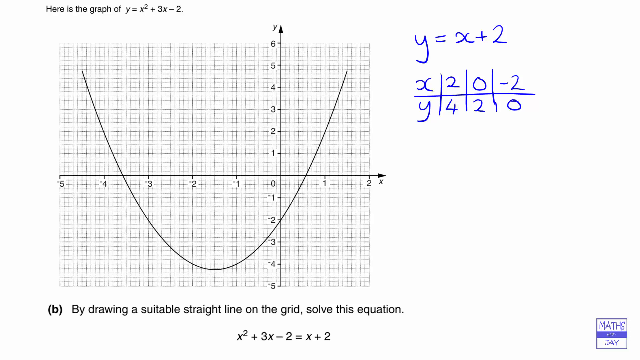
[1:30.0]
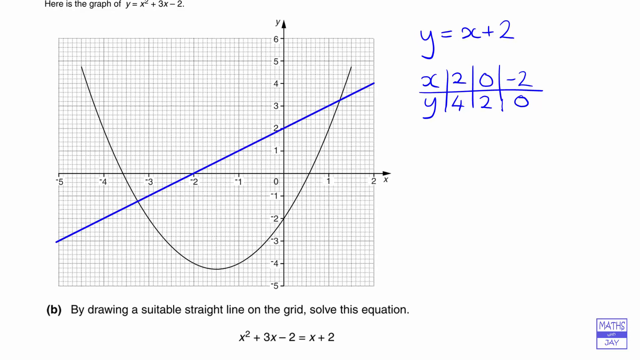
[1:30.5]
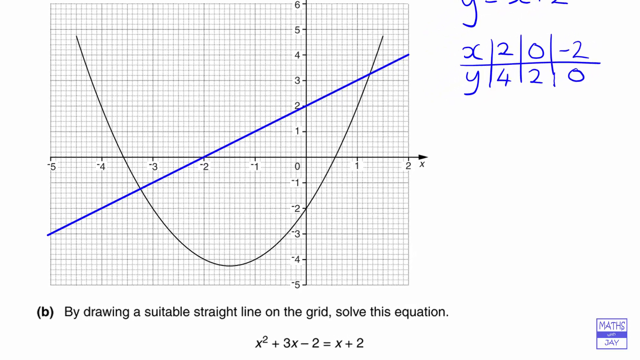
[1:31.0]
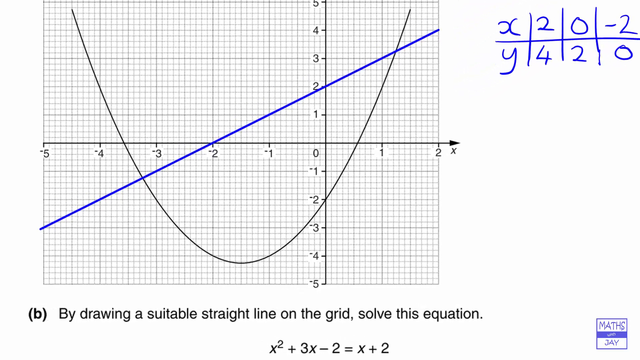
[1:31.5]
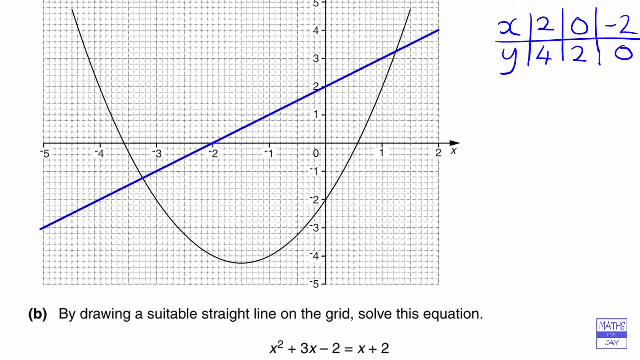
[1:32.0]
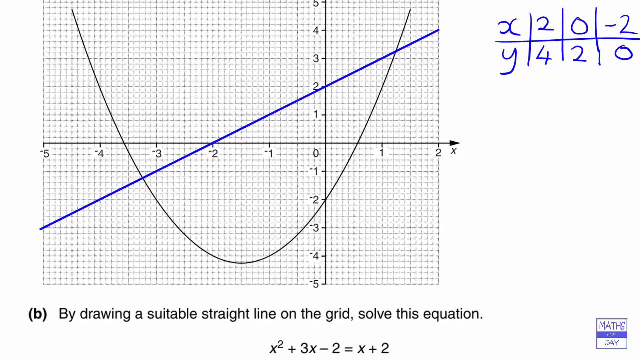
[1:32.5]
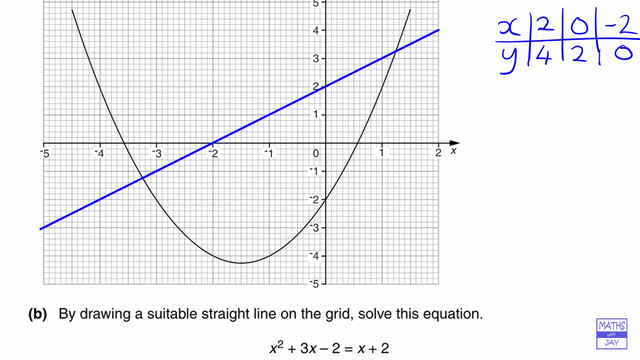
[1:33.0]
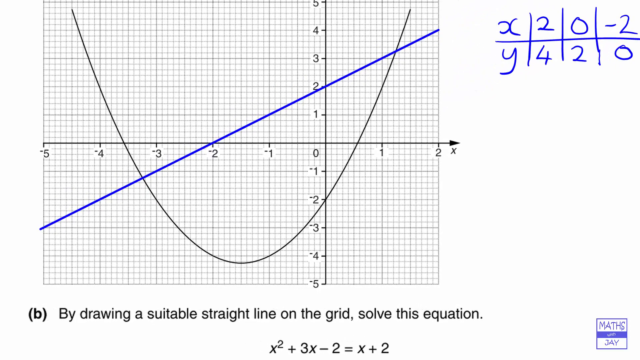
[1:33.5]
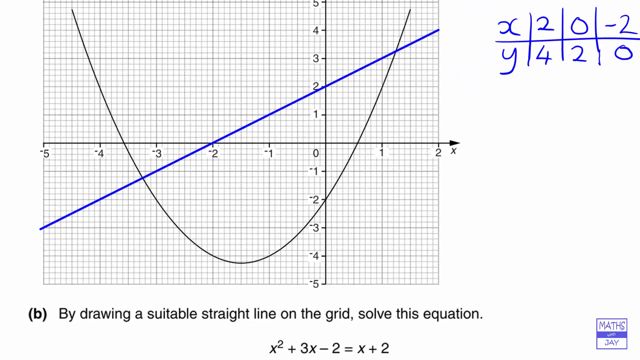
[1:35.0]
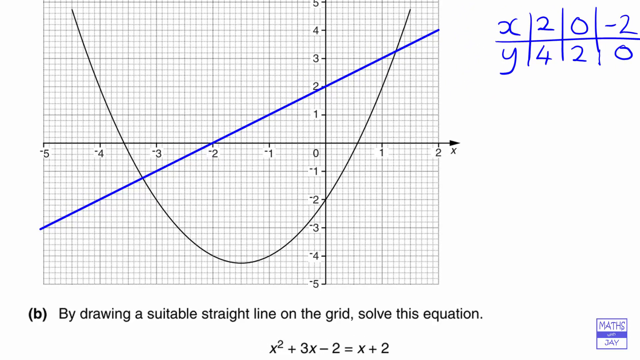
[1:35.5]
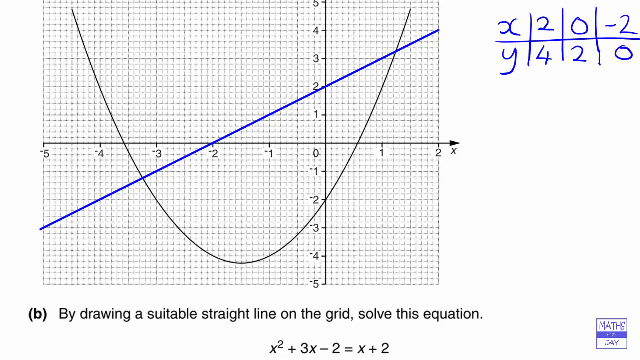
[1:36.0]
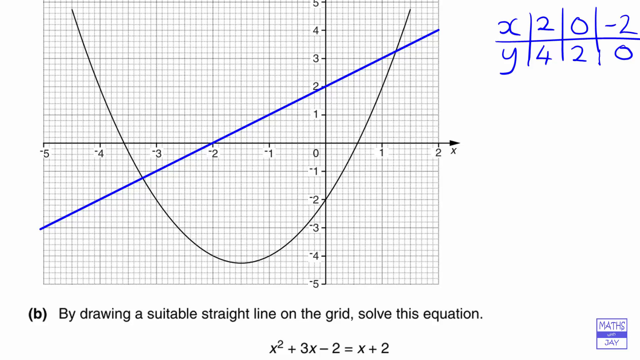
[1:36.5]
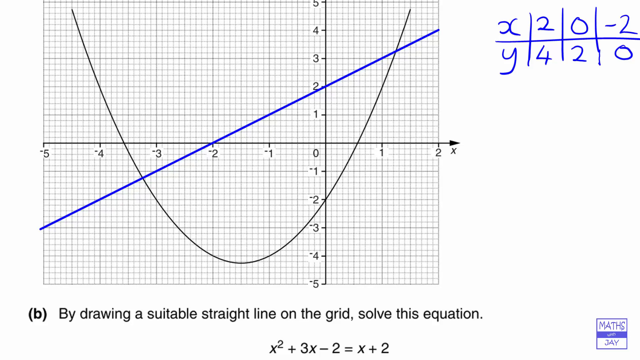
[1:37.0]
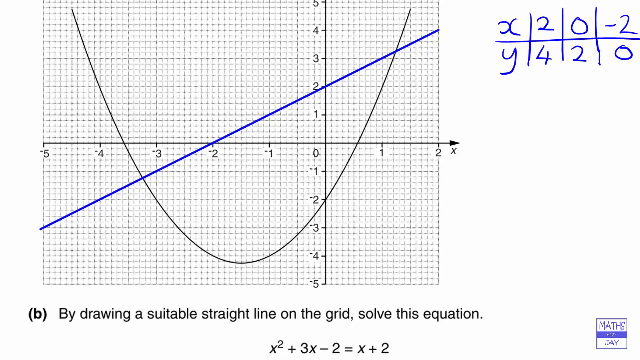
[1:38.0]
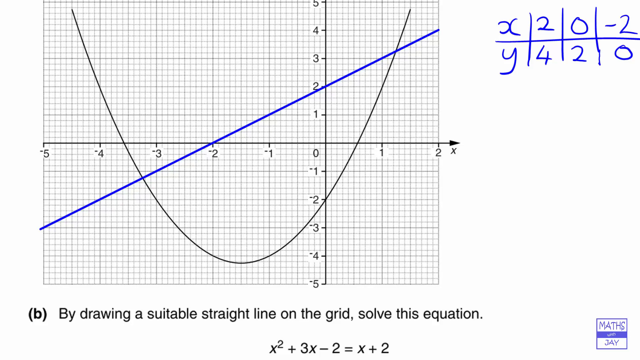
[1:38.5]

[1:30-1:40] The table with x values 2, 0 and −2 and y values 4, 2 and 0 remains. A straight blue line is now on the graph.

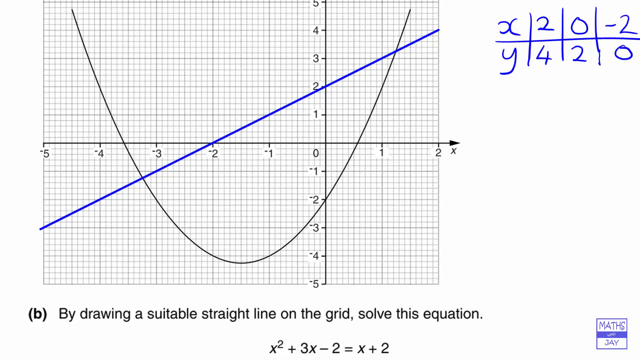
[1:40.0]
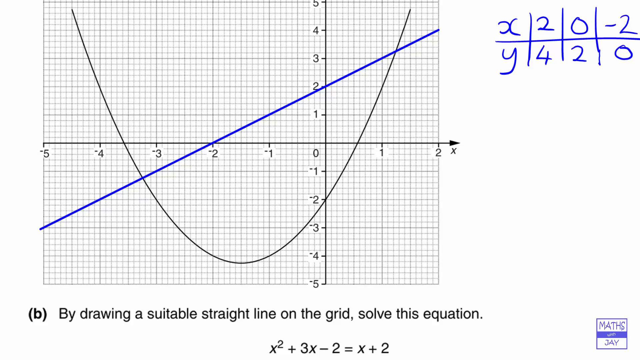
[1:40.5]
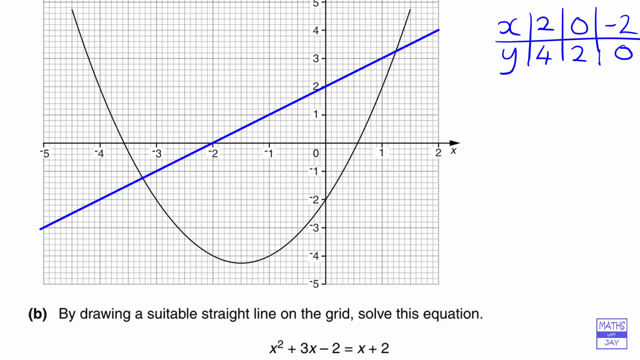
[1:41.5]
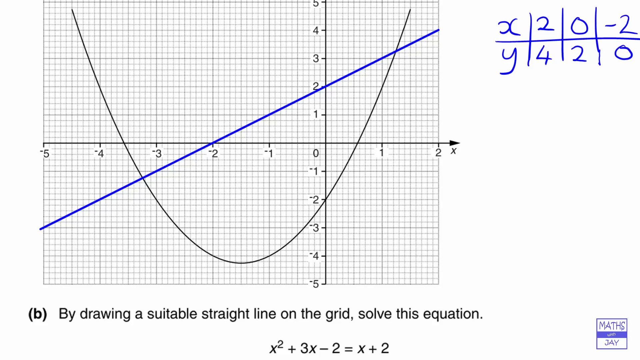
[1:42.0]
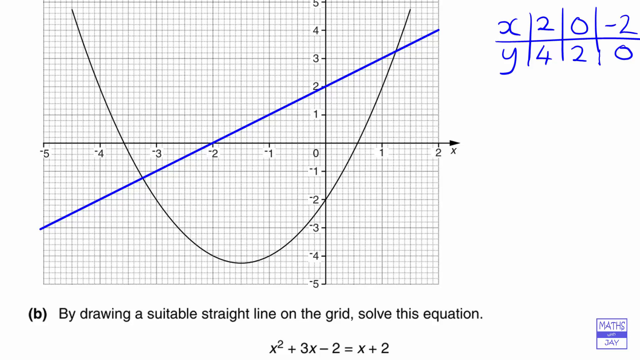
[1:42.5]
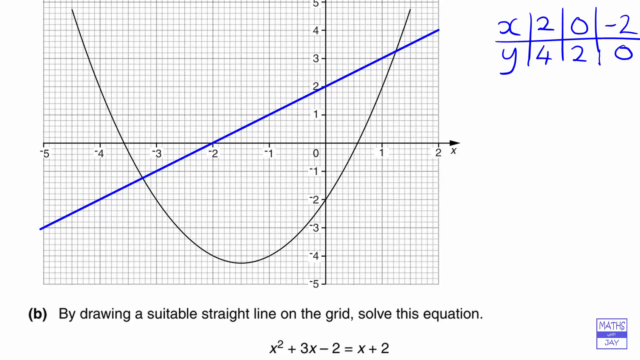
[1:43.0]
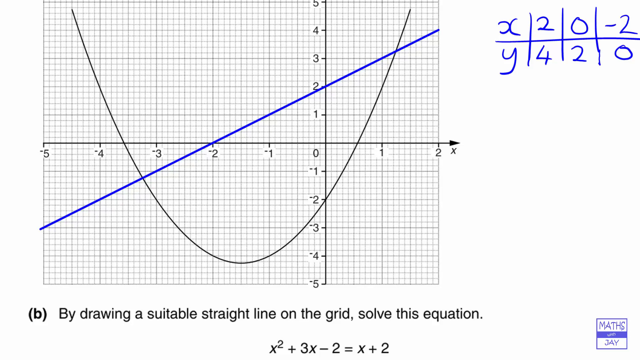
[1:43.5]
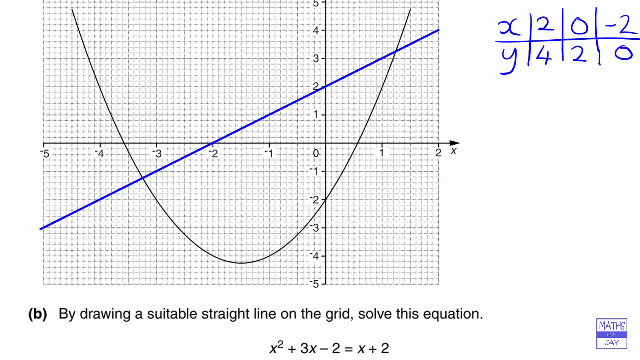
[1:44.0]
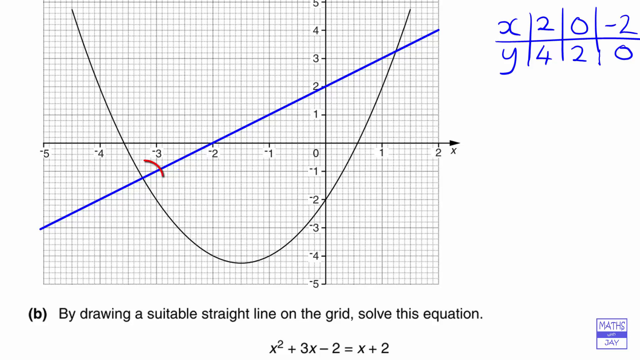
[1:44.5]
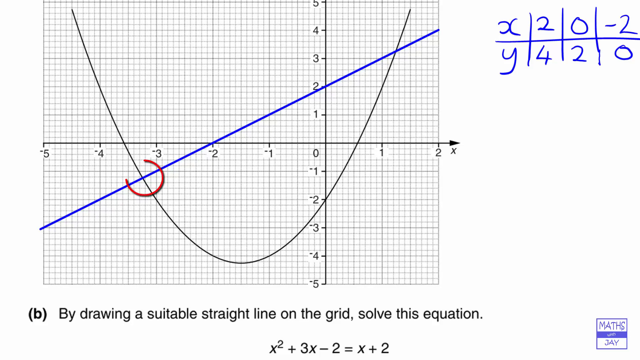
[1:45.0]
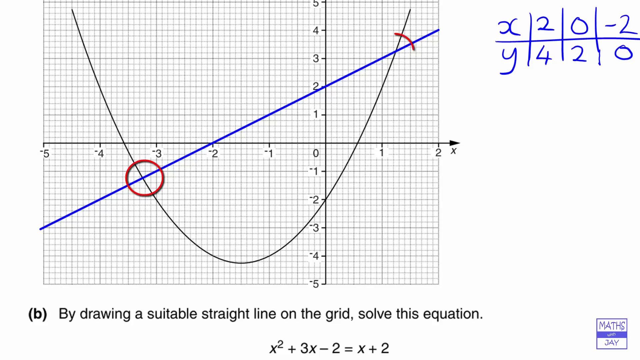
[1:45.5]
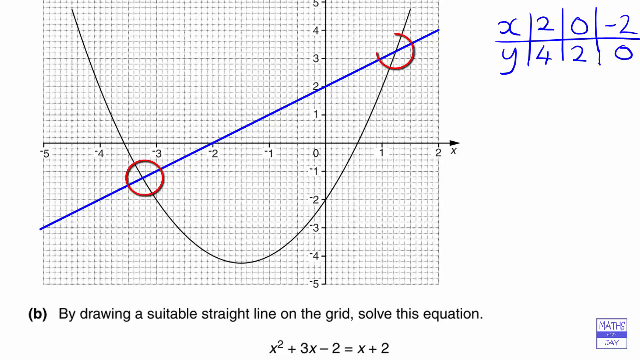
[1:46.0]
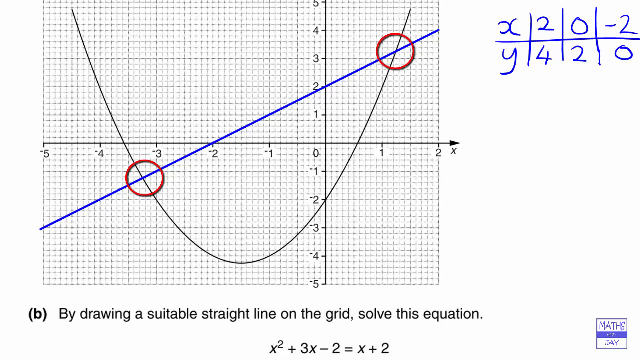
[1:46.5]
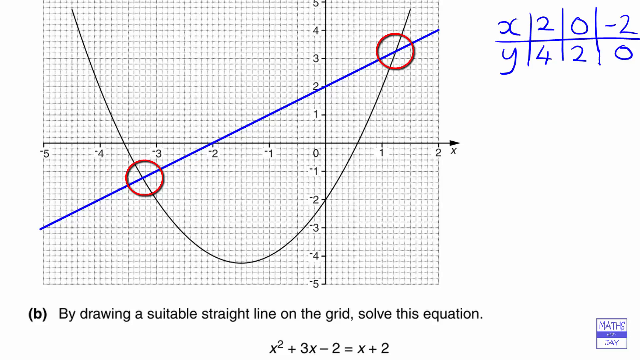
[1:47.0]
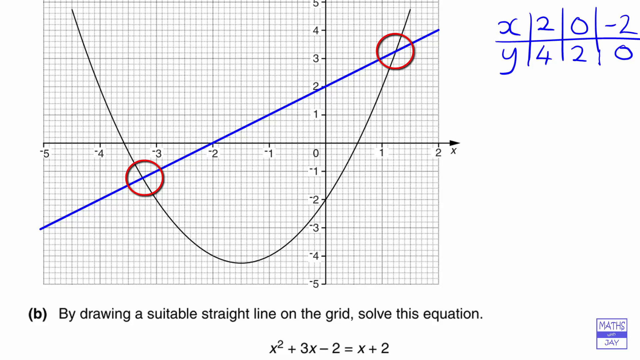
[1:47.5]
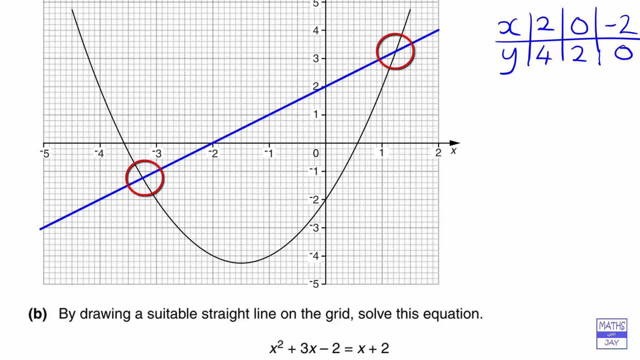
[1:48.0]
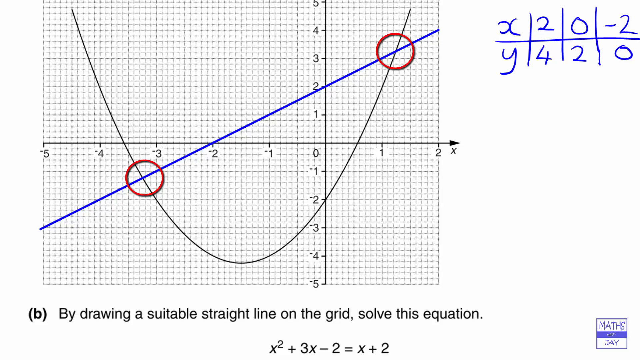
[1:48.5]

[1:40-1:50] A blue slant line has been drawn across the graph. At the point where the lines cross each other, a red circle is drawn over the intersection.